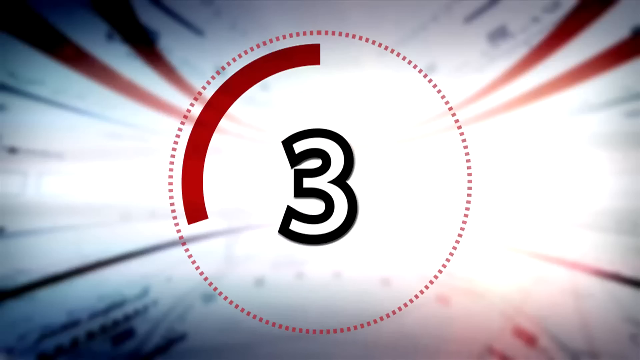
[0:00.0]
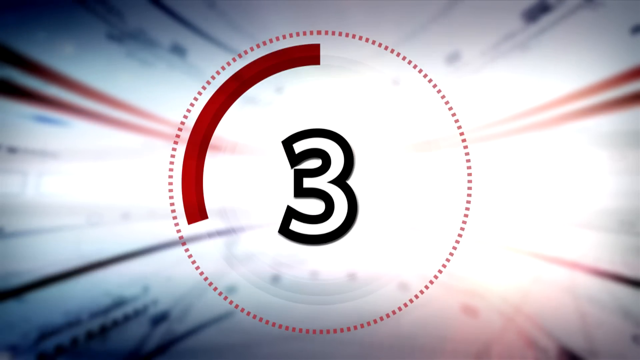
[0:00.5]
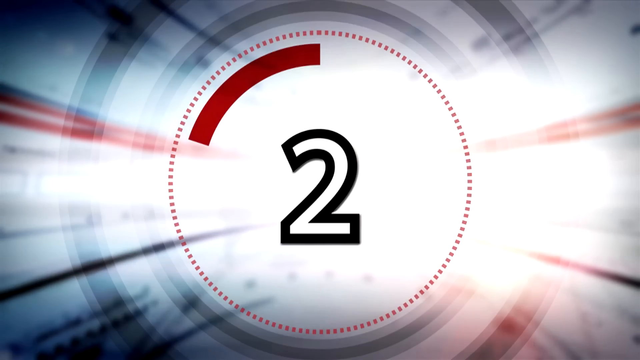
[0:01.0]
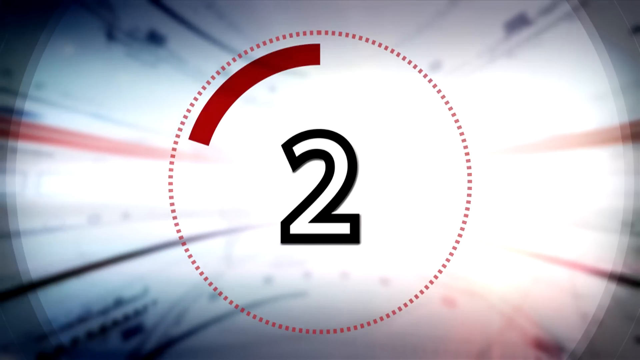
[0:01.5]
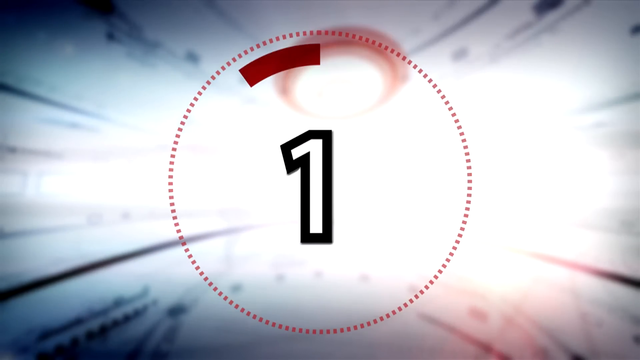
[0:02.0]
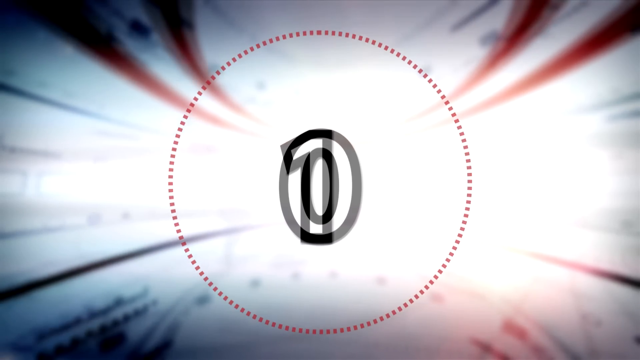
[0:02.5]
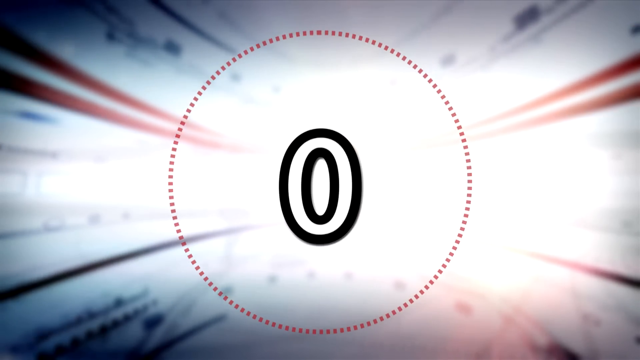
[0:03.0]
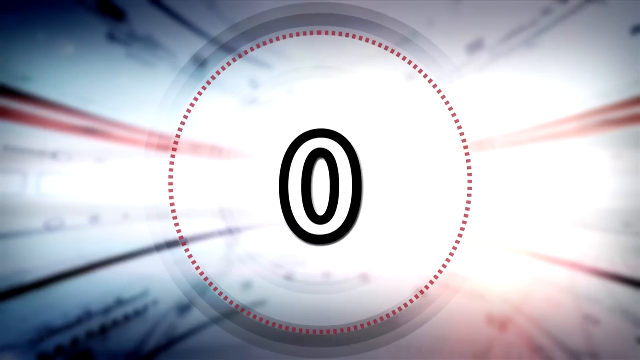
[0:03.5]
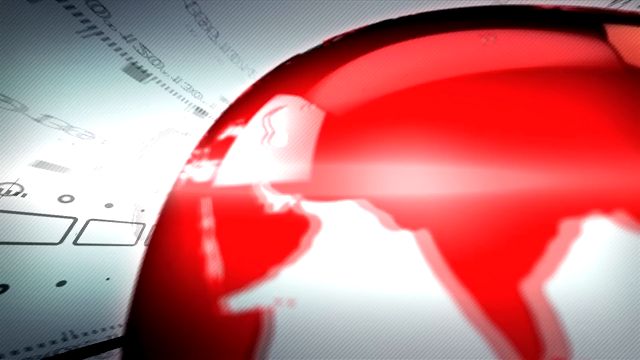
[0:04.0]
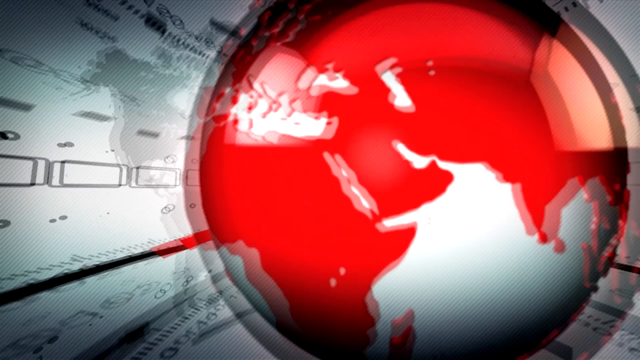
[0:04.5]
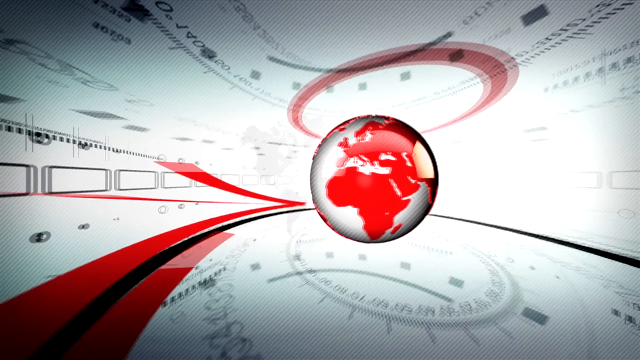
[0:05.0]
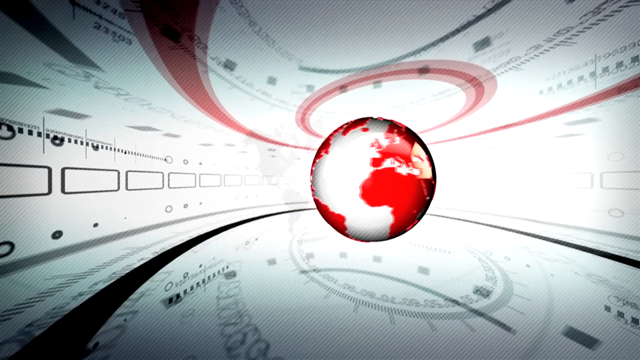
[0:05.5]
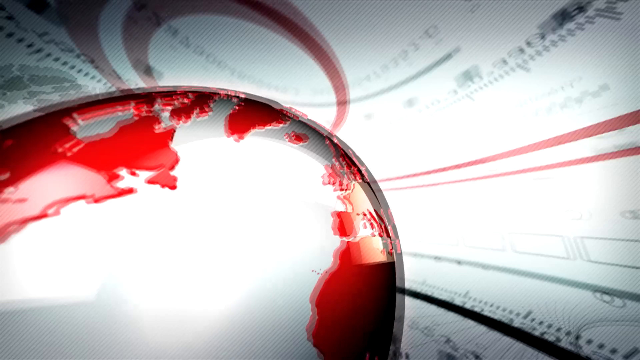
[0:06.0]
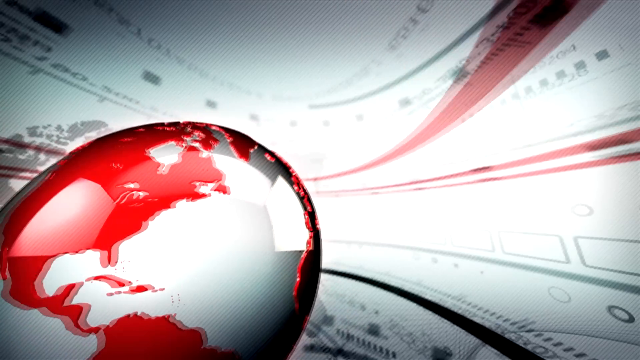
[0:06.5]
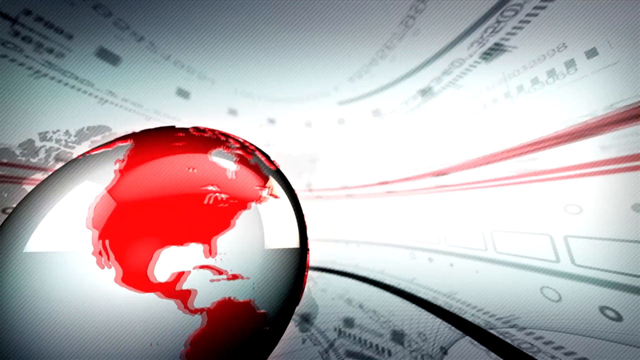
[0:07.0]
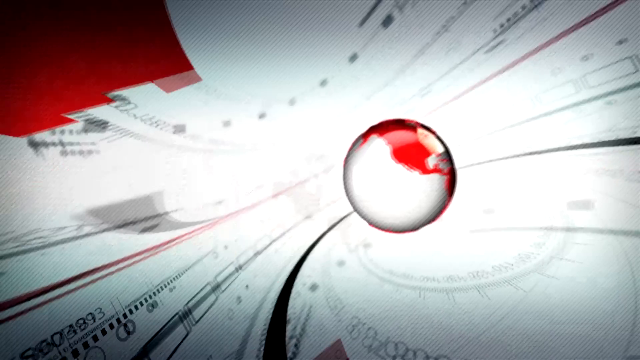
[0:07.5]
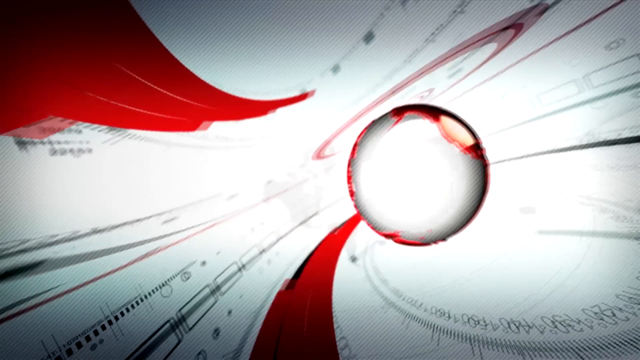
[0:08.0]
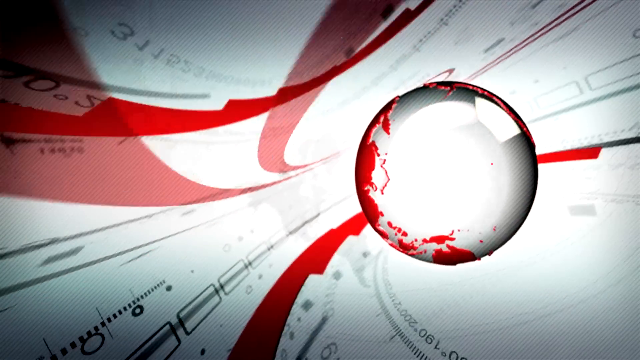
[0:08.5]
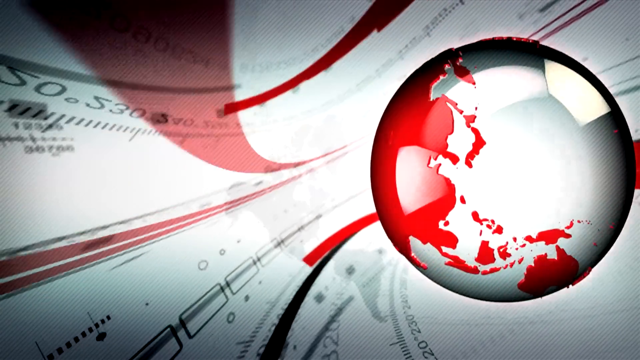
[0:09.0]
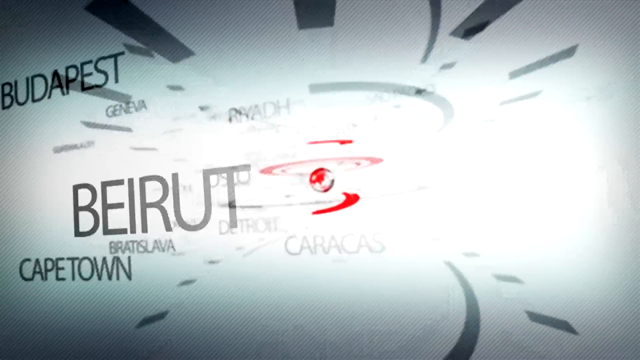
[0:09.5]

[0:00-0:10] The video opens with a colorful countdown from 3, 2, 1. The countdown numbers are black and white, with a dotted red circle around them. What looks like the planet Earth appears, with the land depicted in red and the oceans in white. The Earth spins through colors while things come out towards the viewer, and there are red lines and black lines.